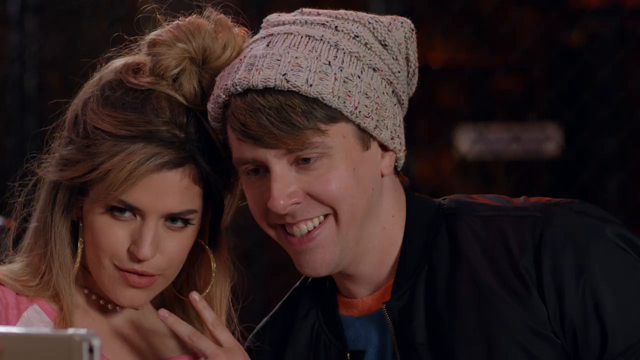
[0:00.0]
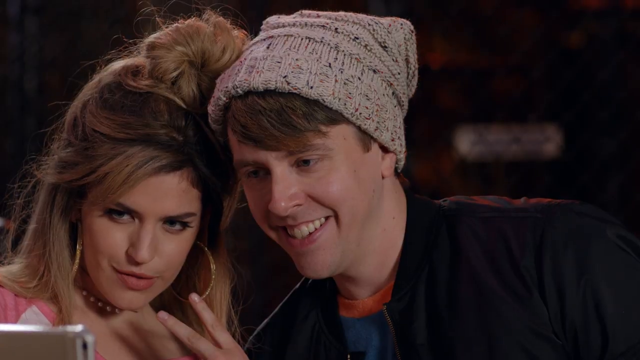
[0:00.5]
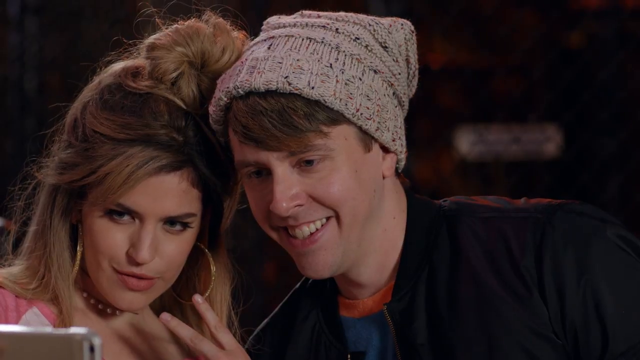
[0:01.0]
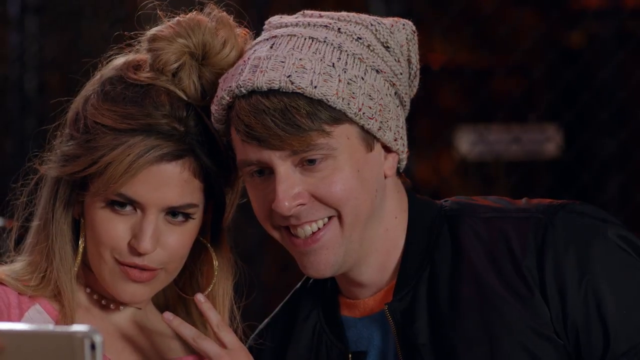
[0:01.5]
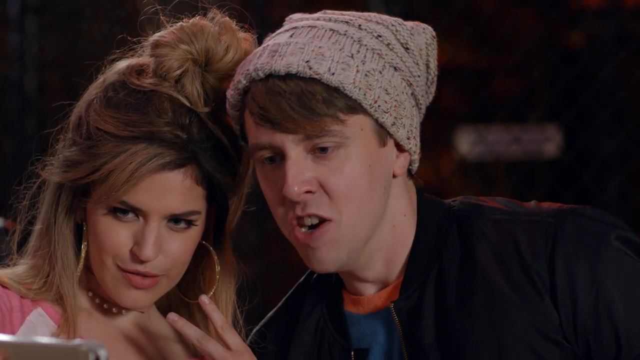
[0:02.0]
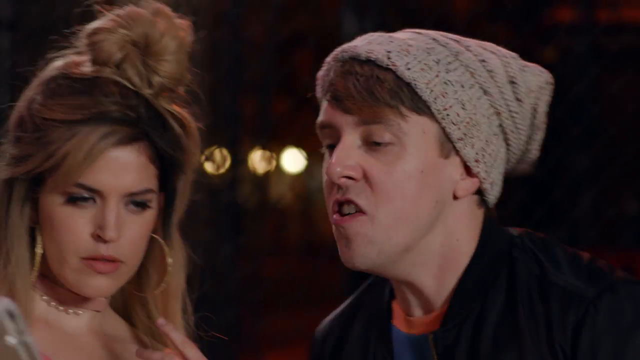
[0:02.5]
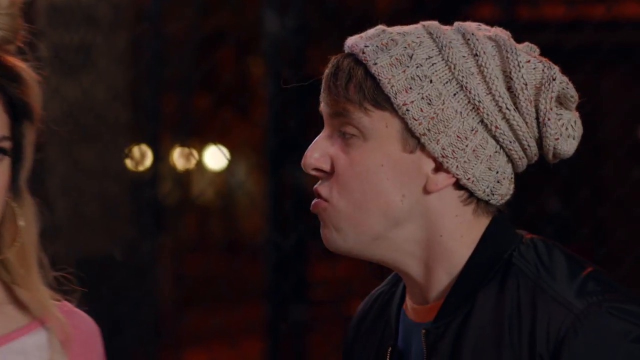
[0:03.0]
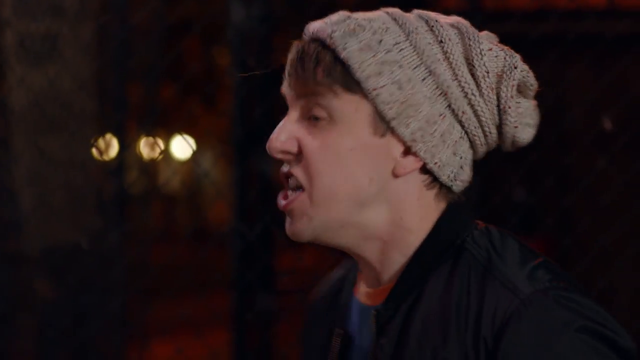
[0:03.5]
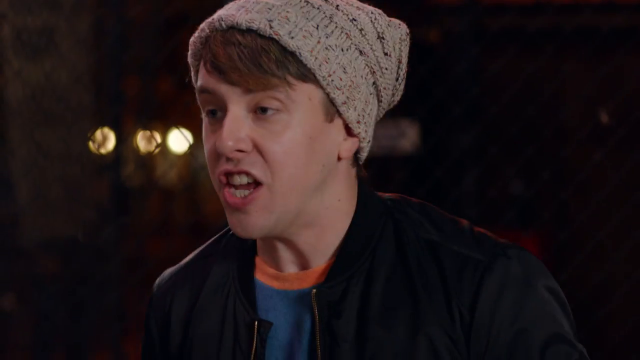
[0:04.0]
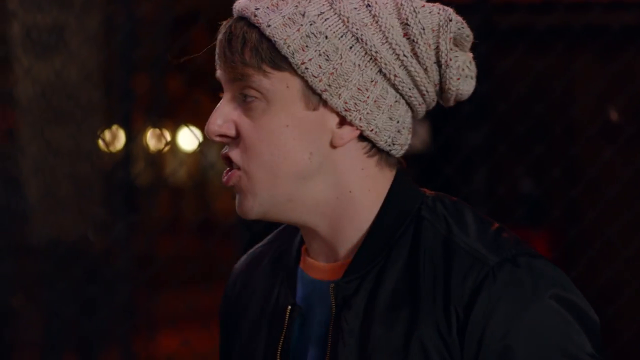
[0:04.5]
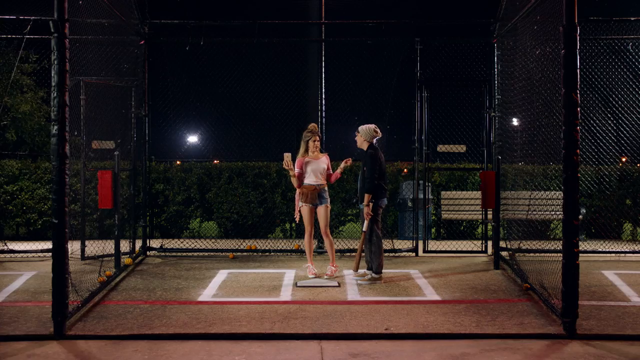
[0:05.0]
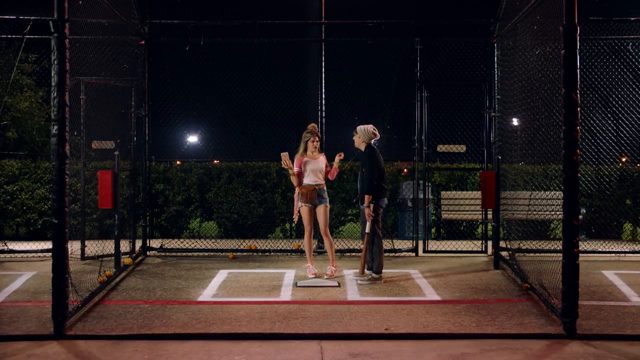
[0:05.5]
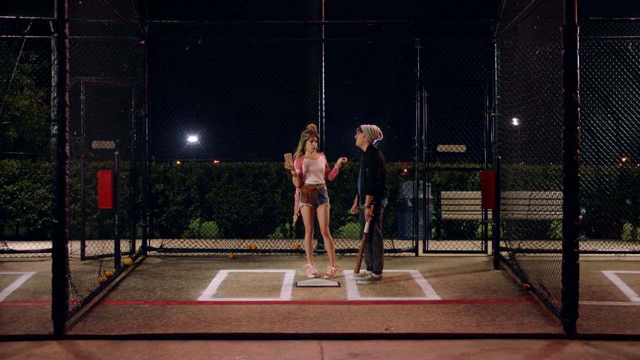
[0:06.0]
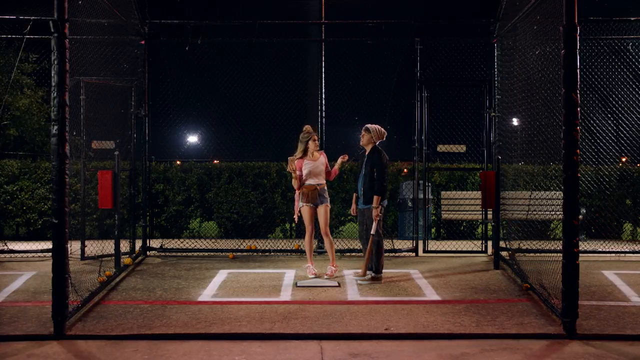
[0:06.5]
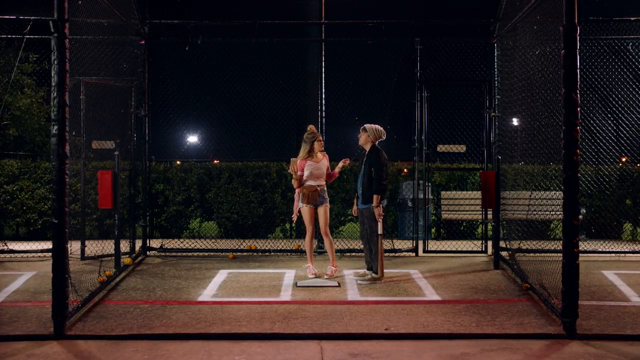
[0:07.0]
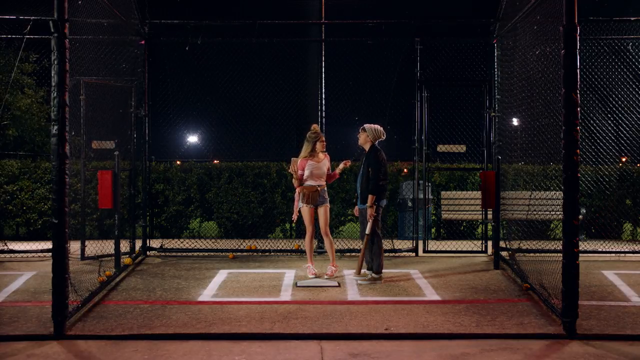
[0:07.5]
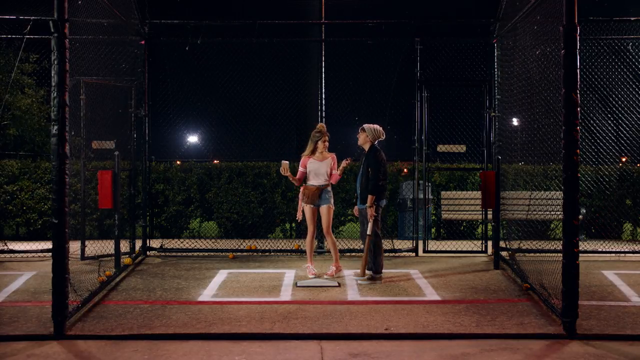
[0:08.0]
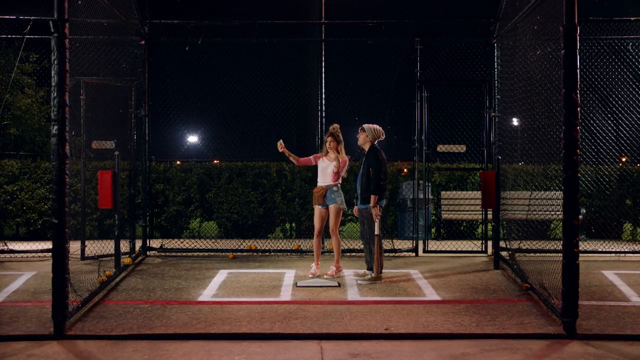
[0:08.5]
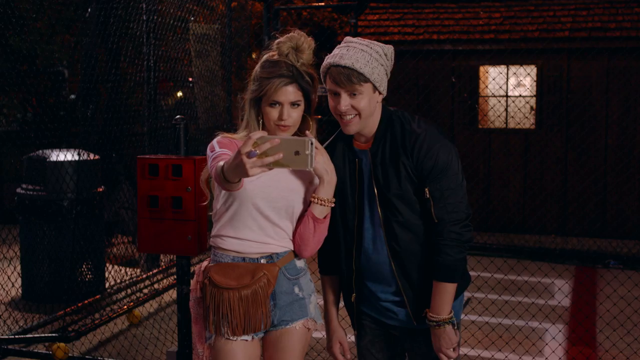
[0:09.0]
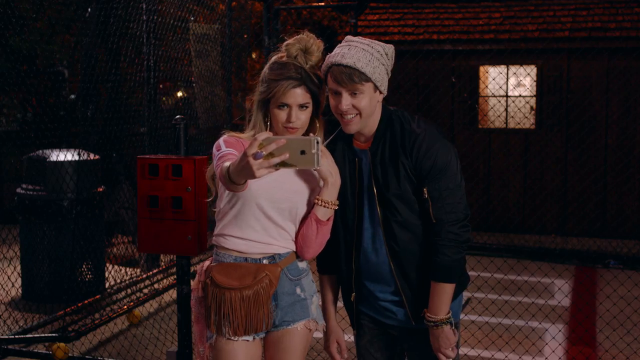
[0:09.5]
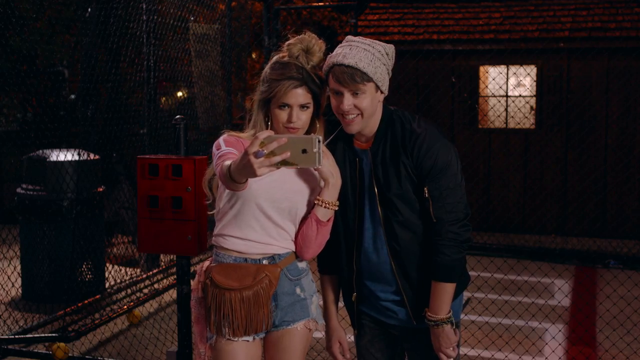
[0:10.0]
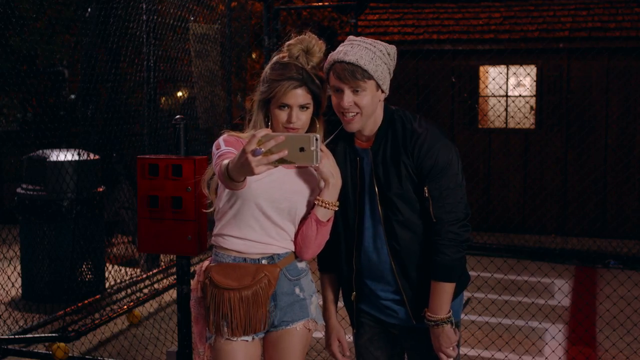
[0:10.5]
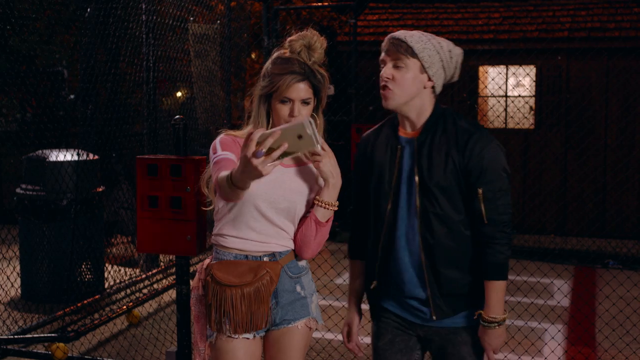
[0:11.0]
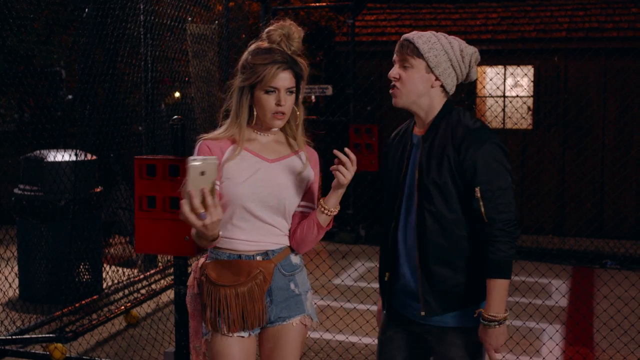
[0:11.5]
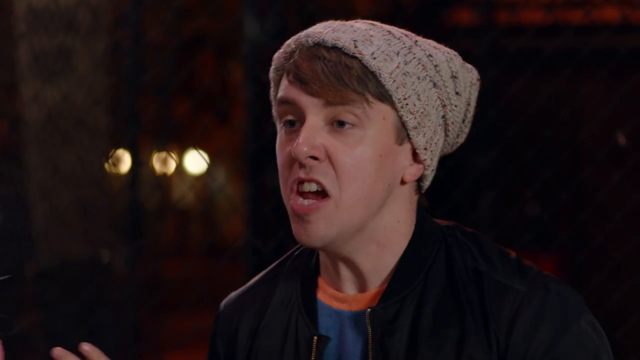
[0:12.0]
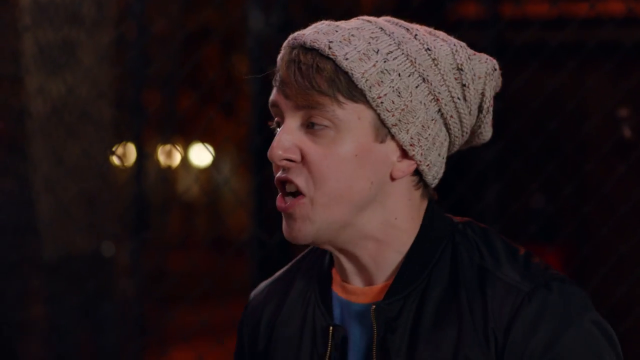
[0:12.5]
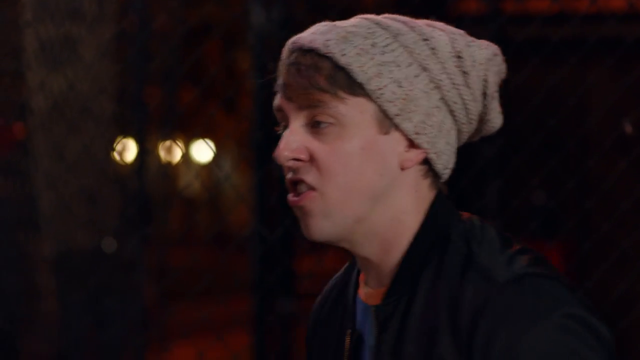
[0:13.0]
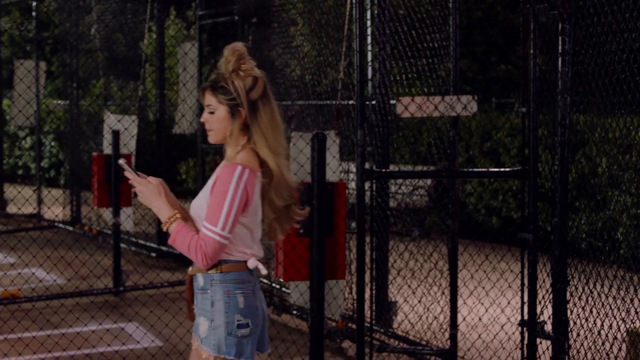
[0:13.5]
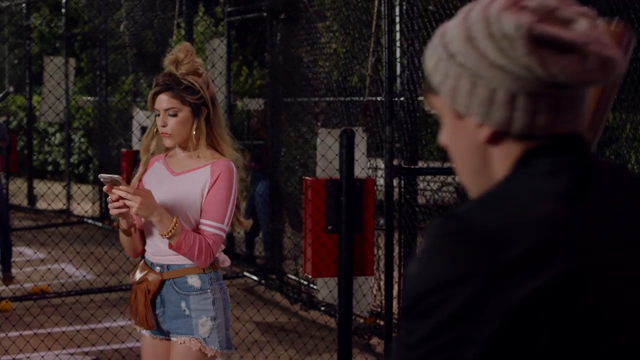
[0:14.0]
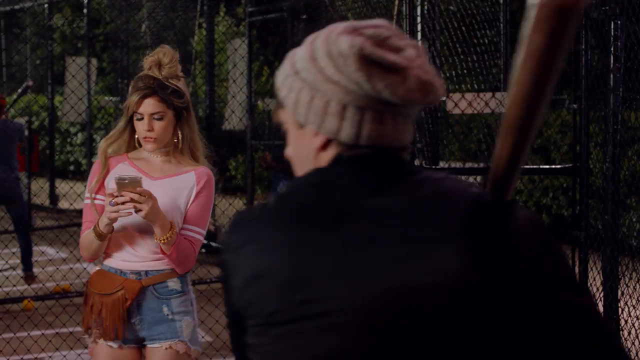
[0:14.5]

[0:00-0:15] The video opens on a close-up of two people, a man and a woman, taking a selfie into a camera. The camera then pulls back to a wide angle, revealing that the two are standing in a batting cage at night. The man wears a jacket, long pants and a winter cap and holds a baseball bat in his left hand. The woman stands behind home plate holding the phone; she wears shorts and a tank top and has long hair. The shot then changes to sort of a medium cut, where the man seems a little annoyed or upset with the woman and is sort of shouting, and she turns to text on her phone.